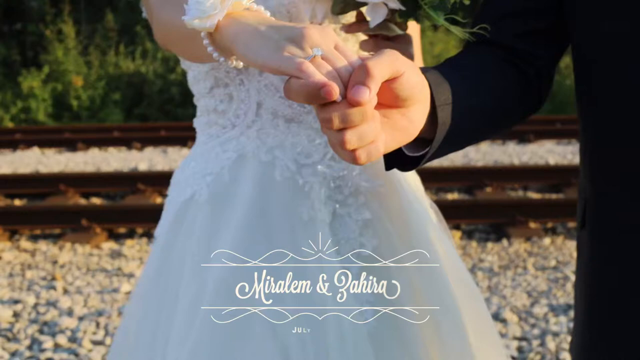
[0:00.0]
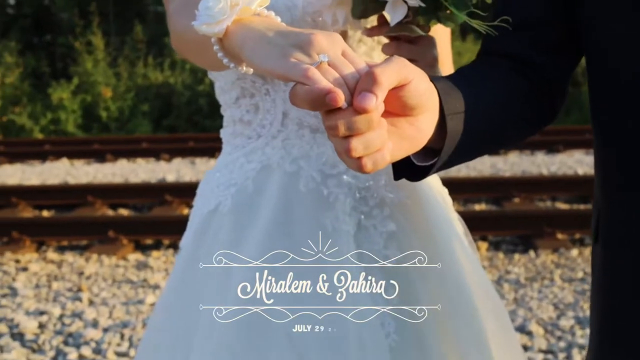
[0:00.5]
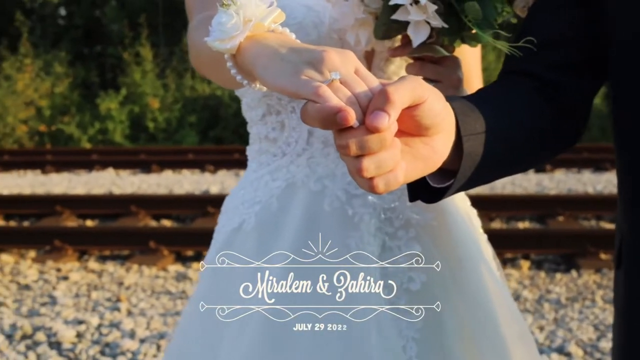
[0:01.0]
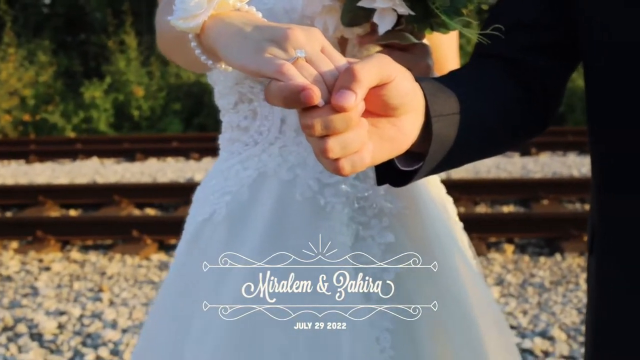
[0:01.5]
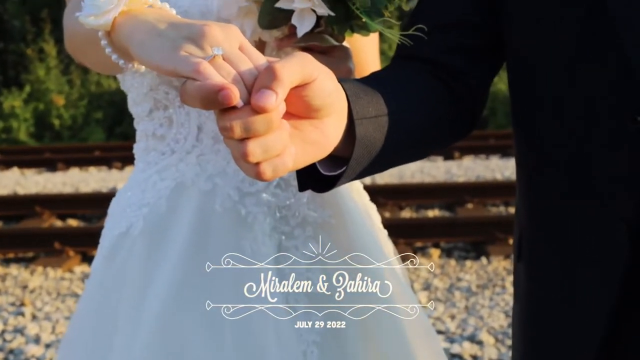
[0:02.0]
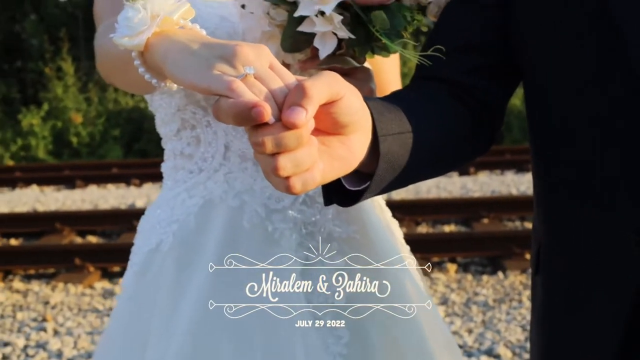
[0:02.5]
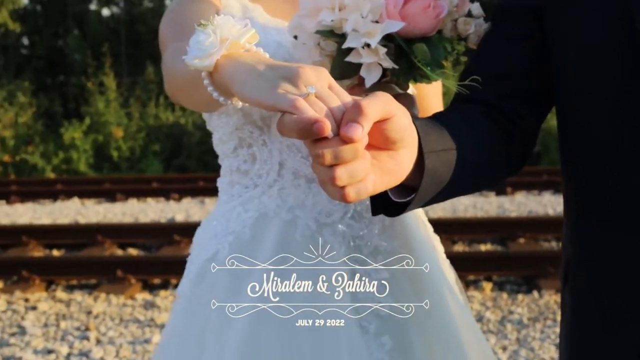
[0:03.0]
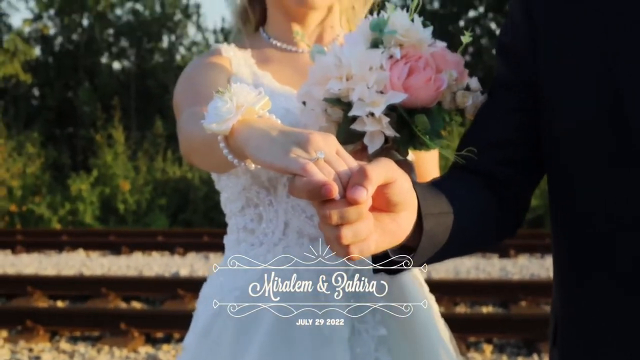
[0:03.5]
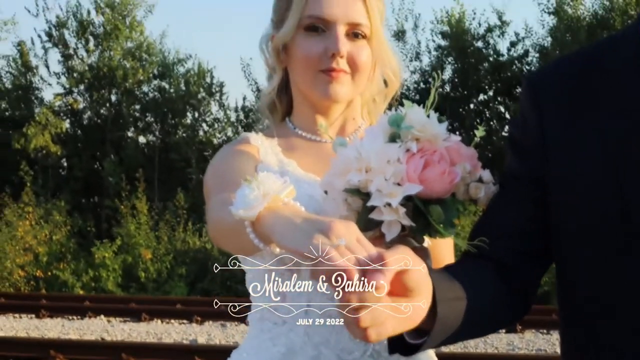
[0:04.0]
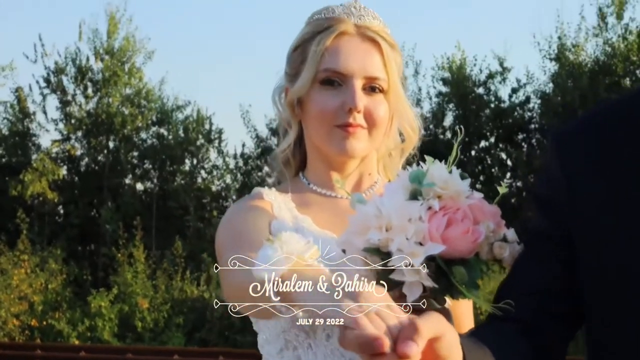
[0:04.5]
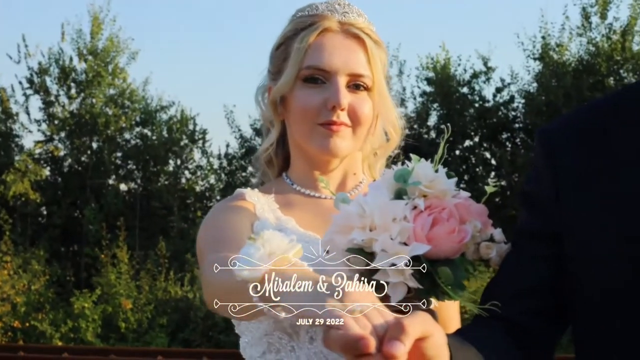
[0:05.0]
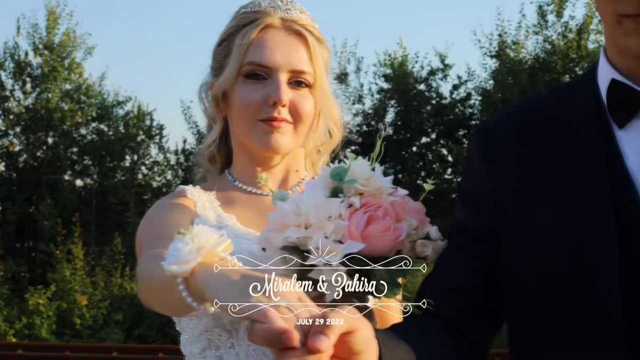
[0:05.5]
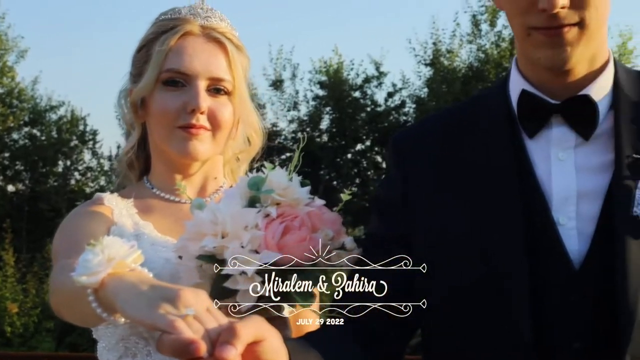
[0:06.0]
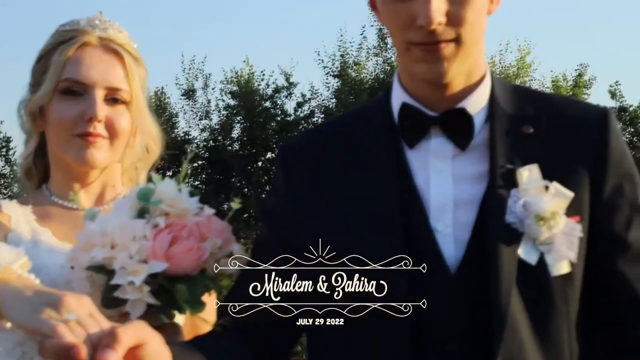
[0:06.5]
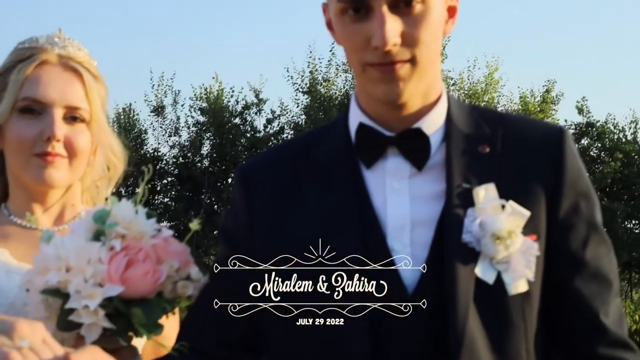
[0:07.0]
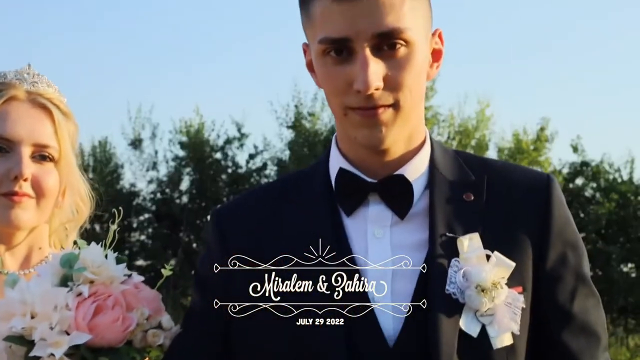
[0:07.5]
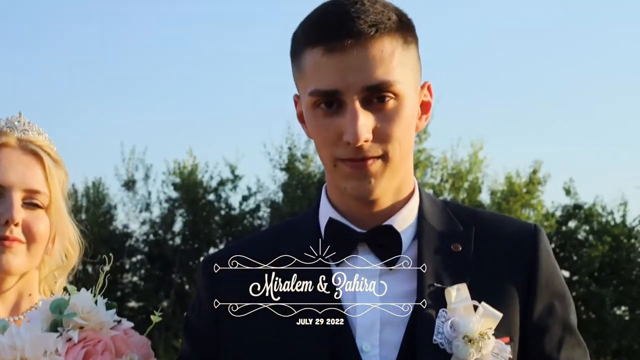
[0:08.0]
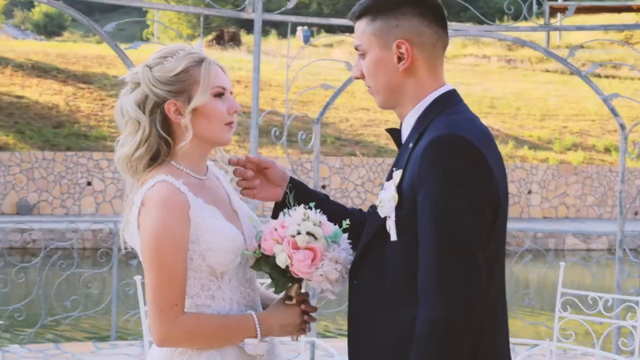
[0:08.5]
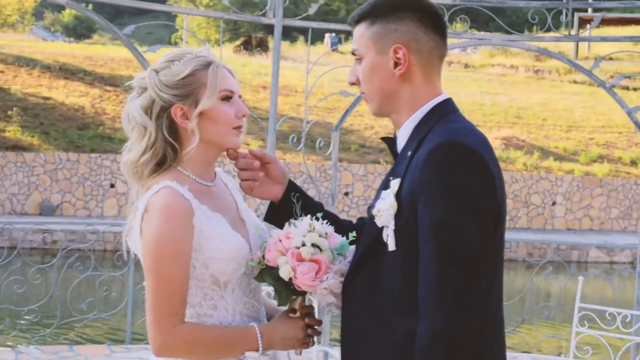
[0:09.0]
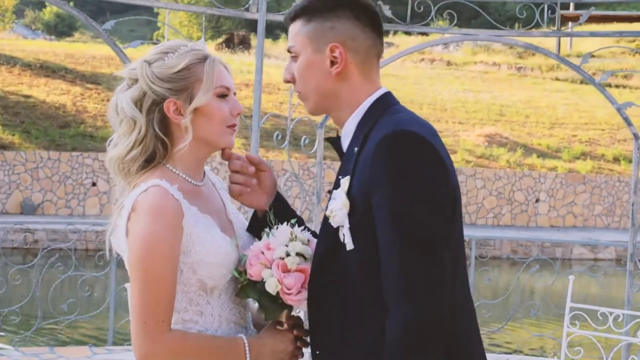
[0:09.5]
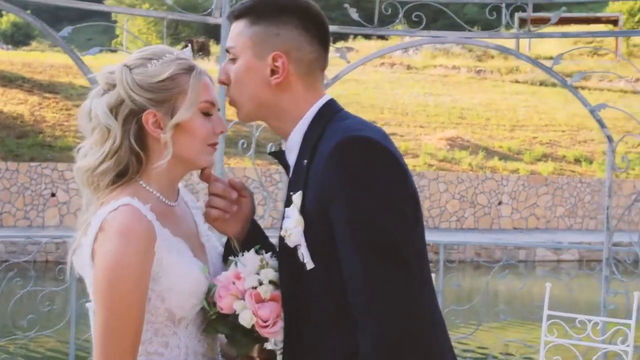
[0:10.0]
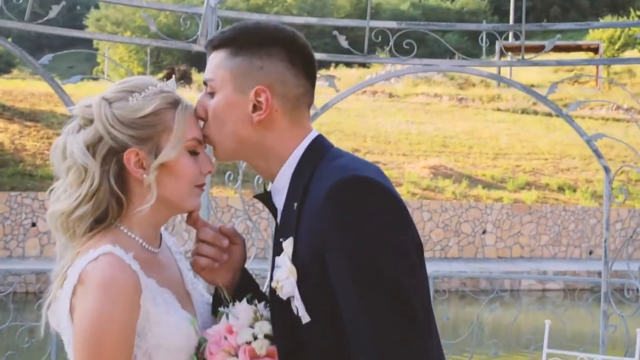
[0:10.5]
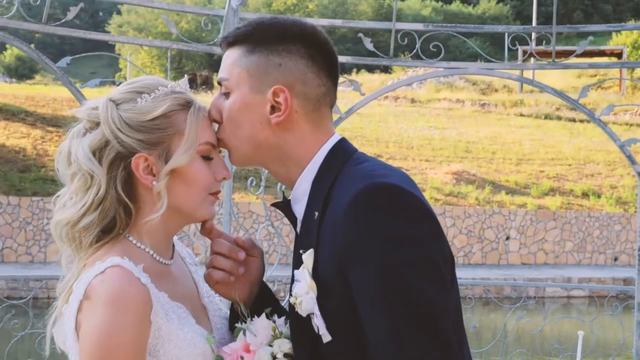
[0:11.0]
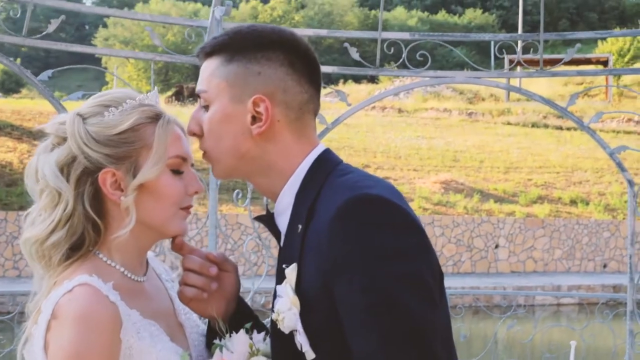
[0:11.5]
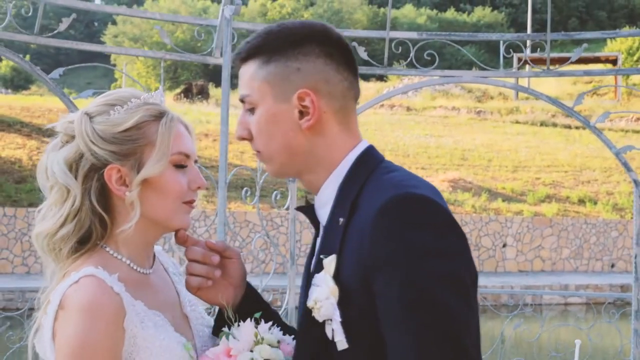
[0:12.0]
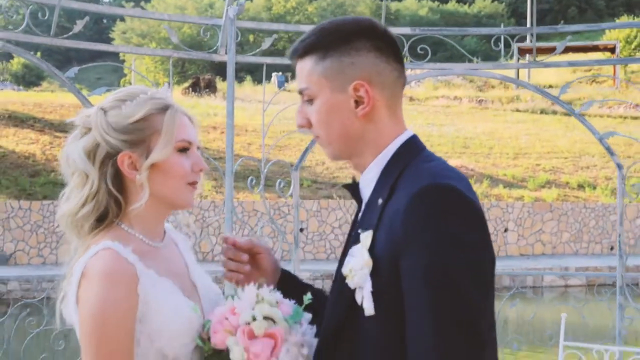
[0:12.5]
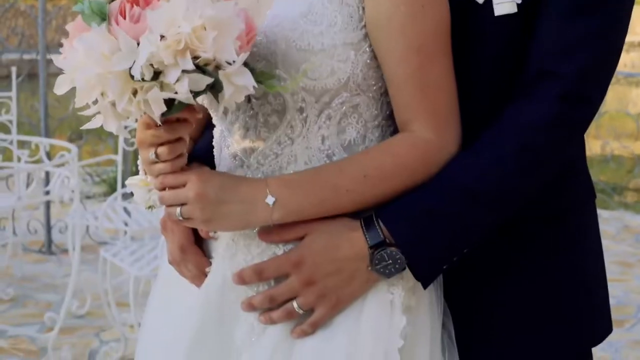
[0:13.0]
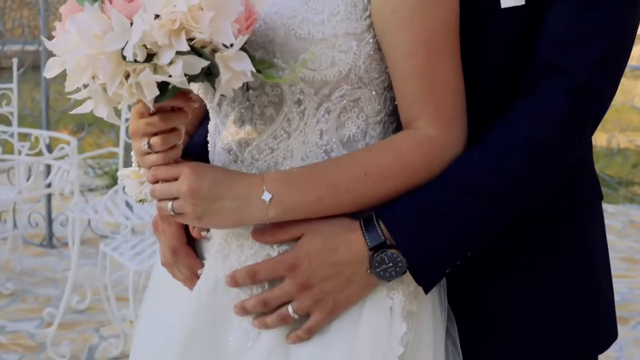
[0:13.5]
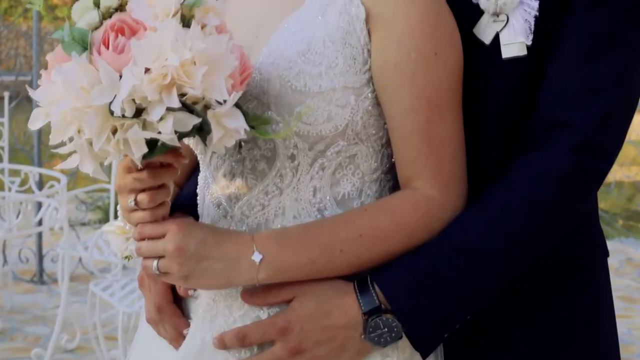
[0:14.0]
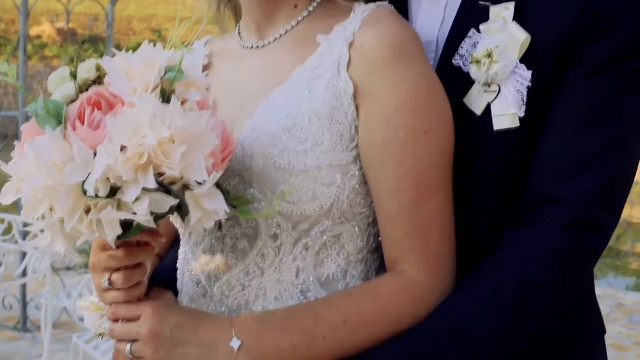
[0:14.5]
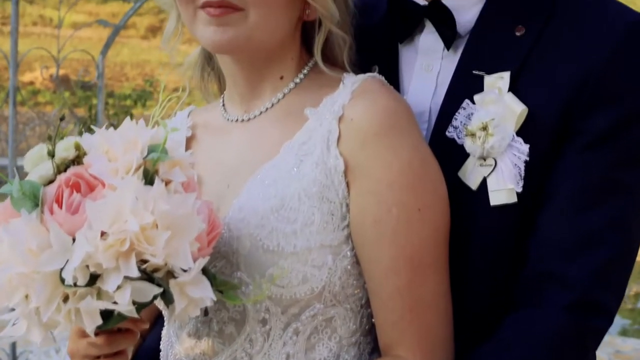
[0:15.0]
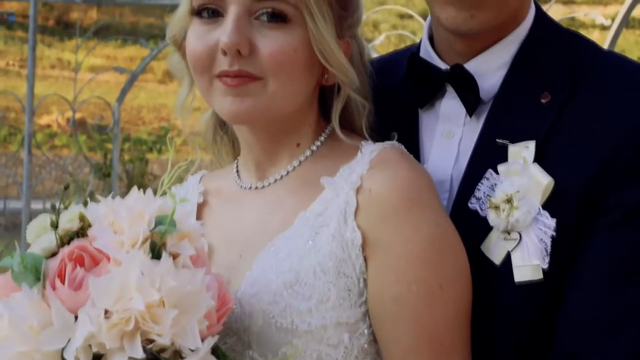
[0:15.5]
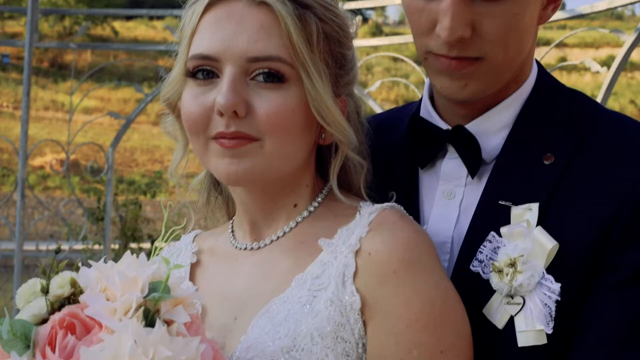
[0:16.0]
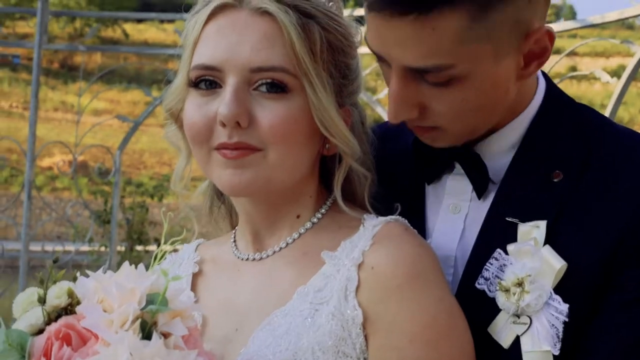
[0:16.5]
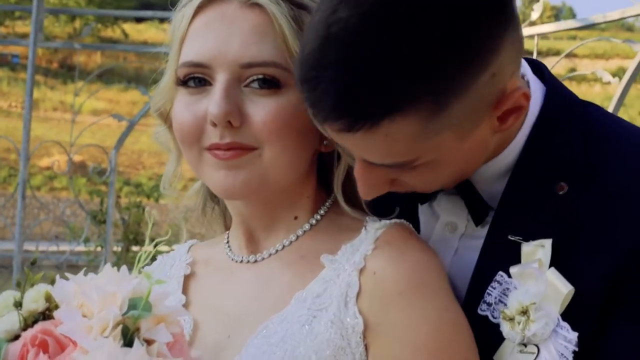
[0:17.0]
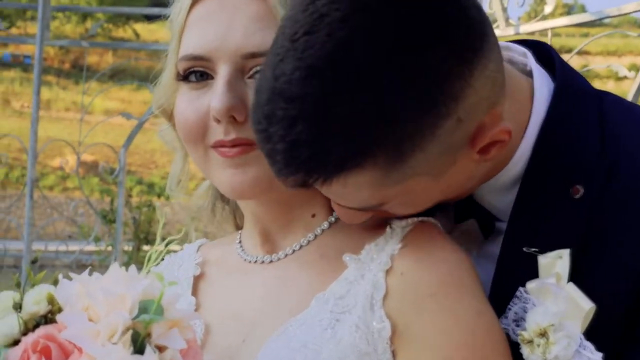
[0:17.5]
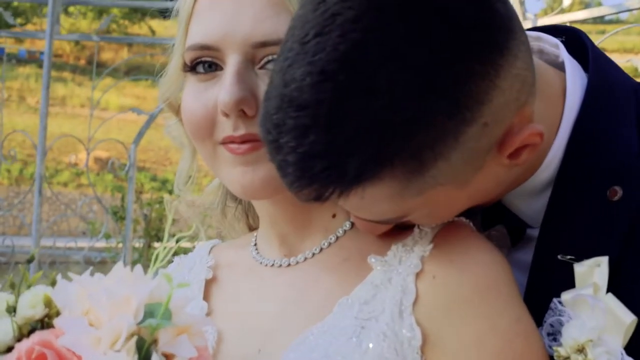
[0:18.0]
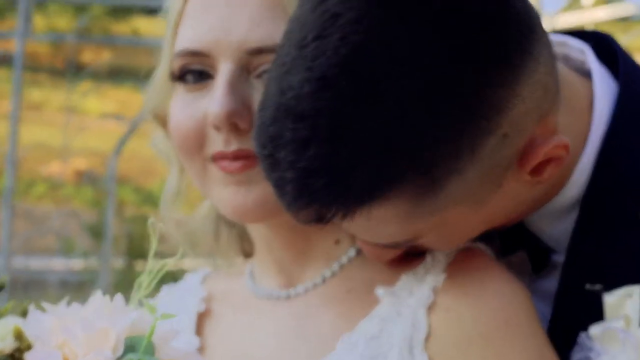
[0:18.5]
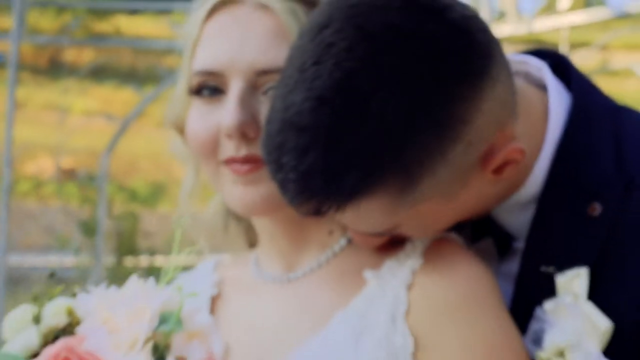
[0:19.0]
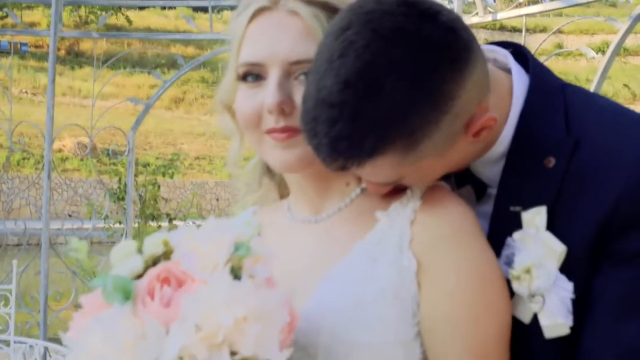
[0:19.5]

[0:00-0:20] A young man holds a woman's hand, her ring finger. She wears a white wedding dress and holds a bouquet of flowers, and he wears a black tuxedo; they are standing outside. He reaches over, lifts her chin and kisses her on the forehead. They appear to be outside, maybe by a gazebo or something similar, and they are probably either about to get married or have just gotten married. Their names appear to be Miralem and Zahira.